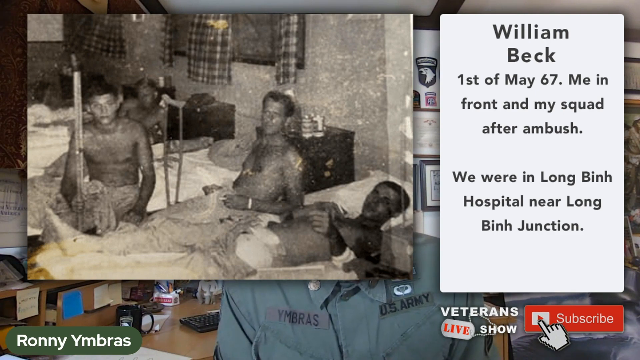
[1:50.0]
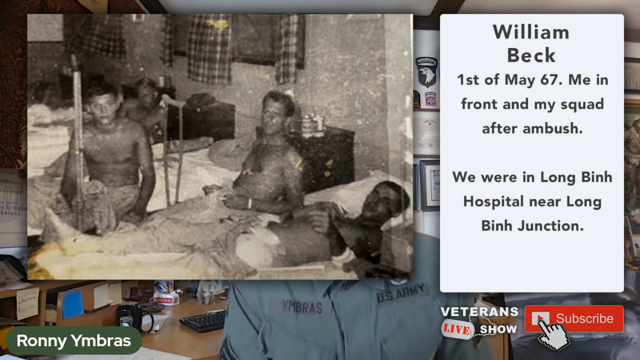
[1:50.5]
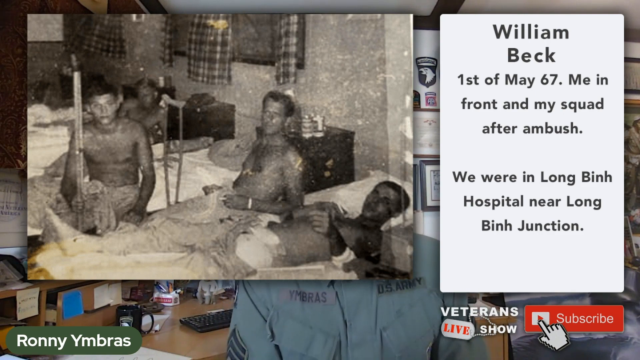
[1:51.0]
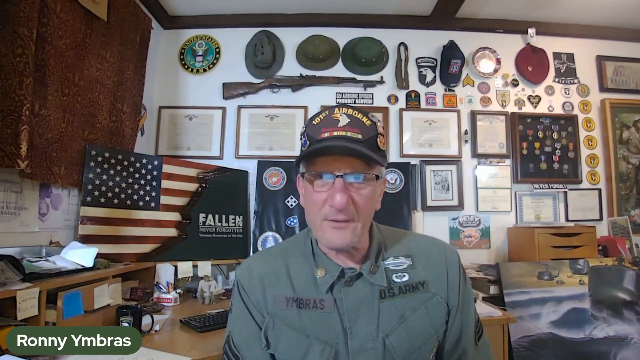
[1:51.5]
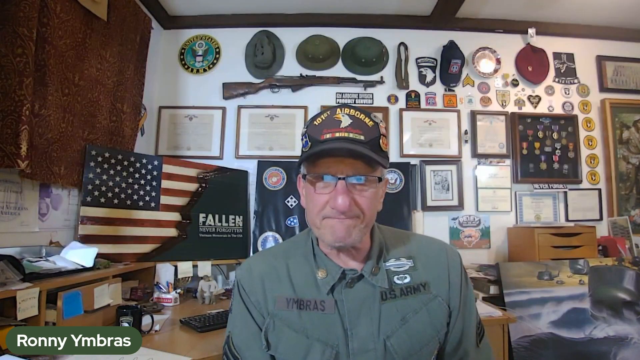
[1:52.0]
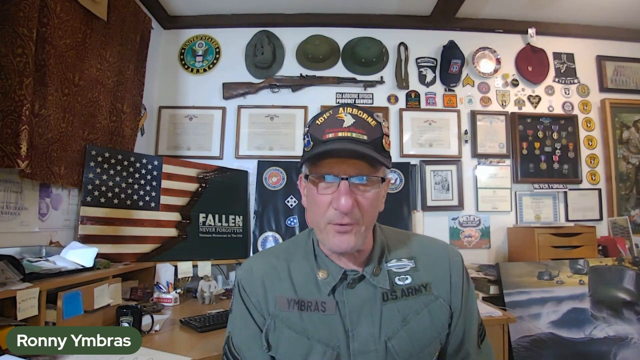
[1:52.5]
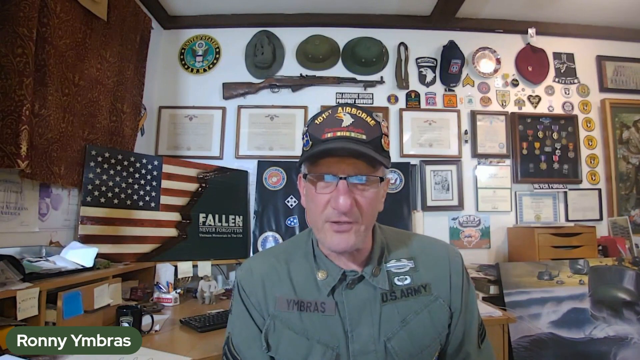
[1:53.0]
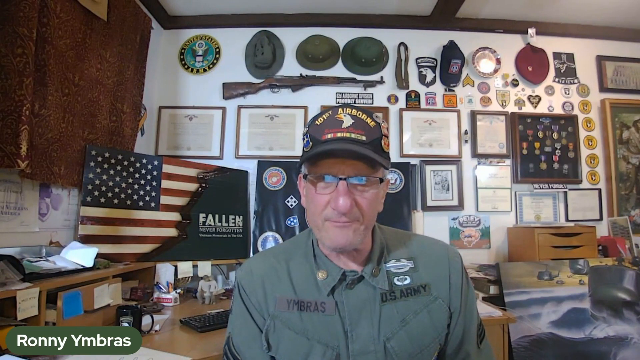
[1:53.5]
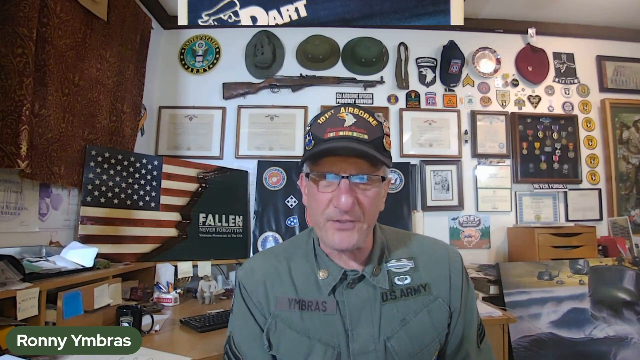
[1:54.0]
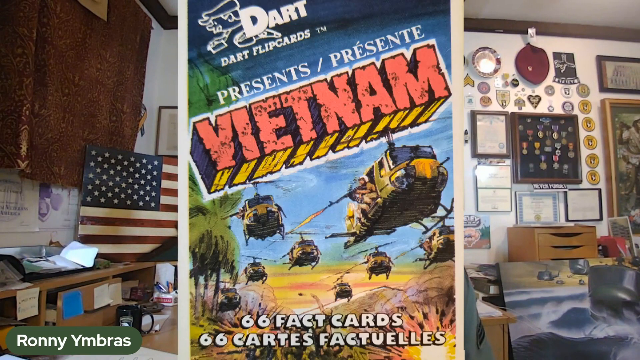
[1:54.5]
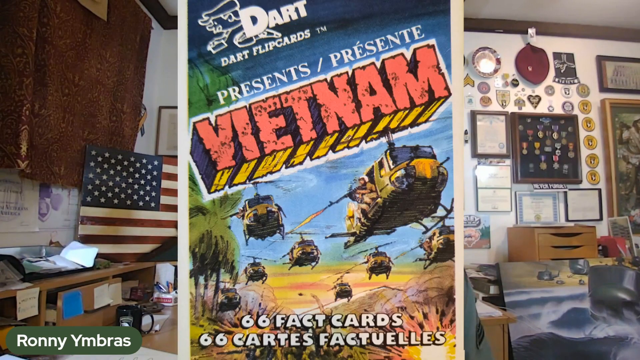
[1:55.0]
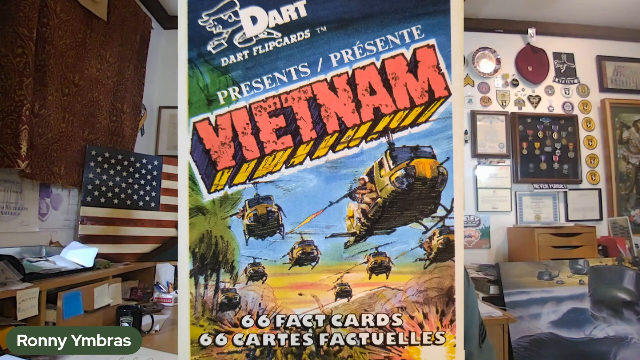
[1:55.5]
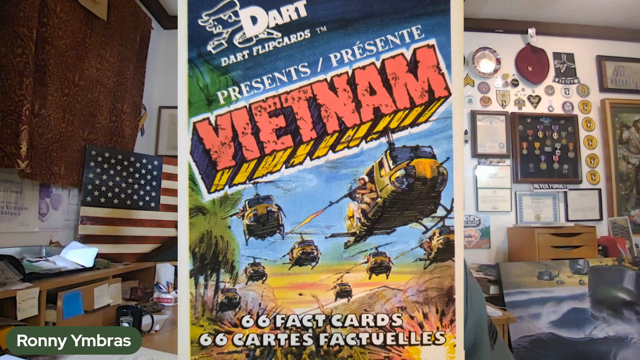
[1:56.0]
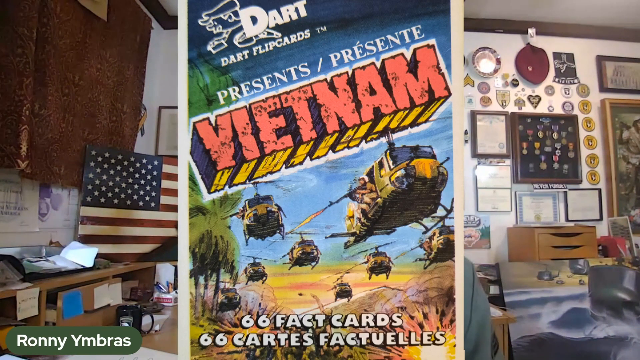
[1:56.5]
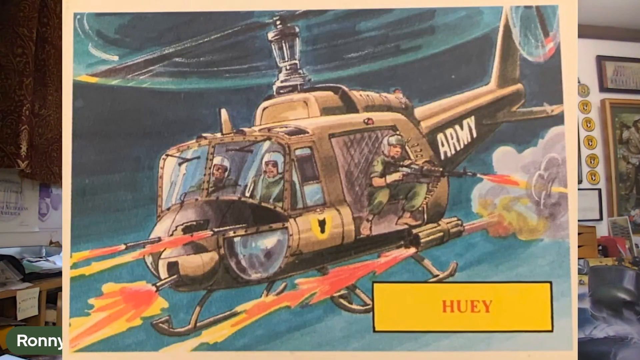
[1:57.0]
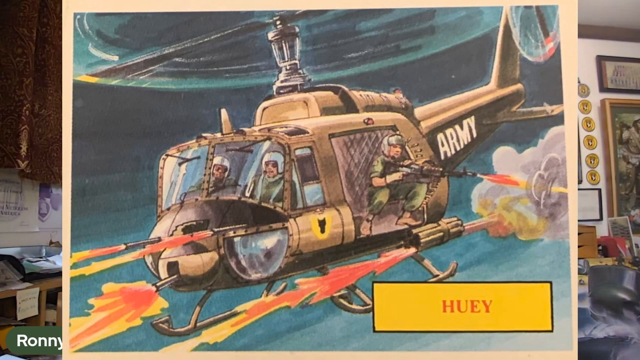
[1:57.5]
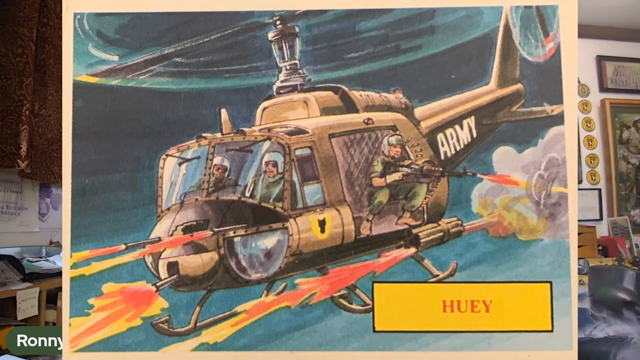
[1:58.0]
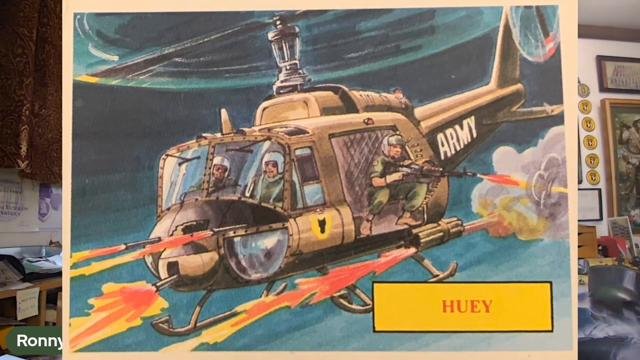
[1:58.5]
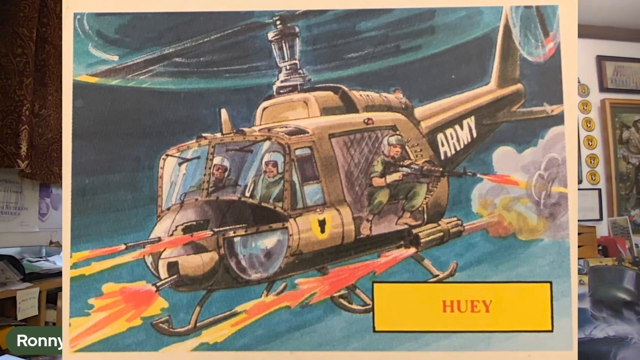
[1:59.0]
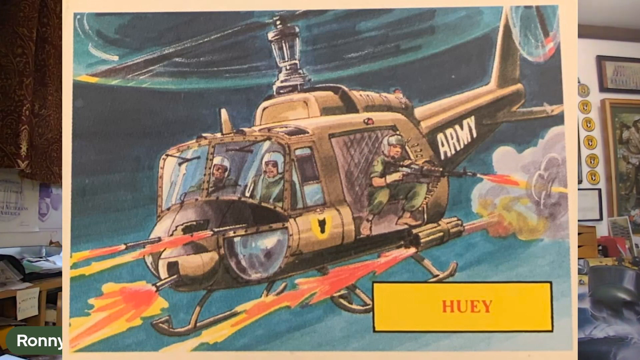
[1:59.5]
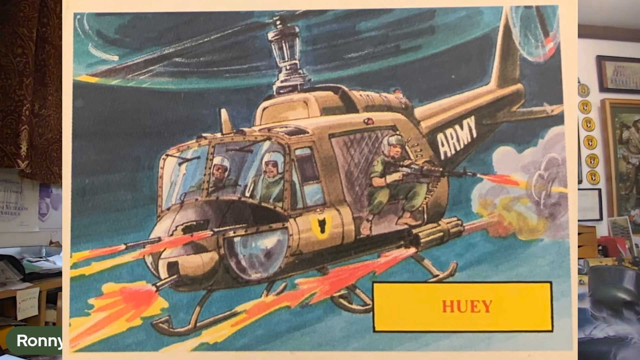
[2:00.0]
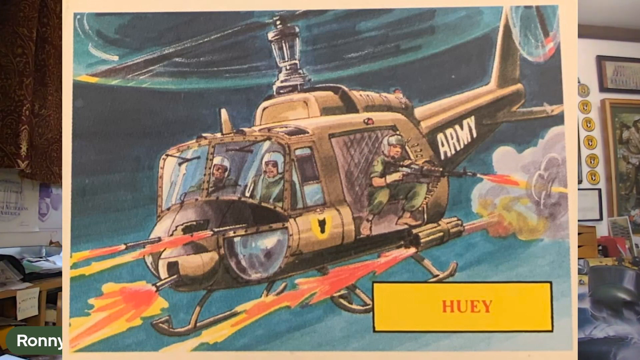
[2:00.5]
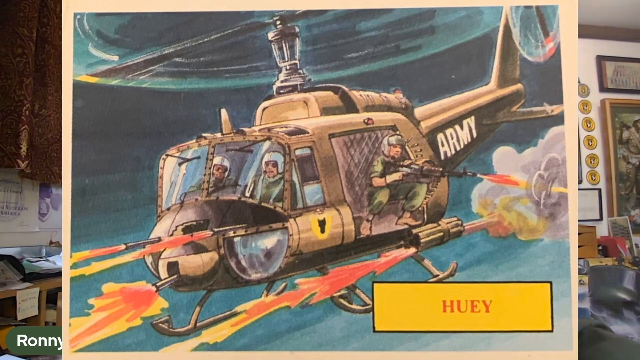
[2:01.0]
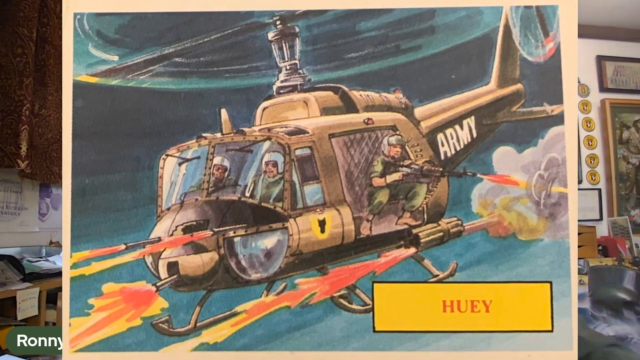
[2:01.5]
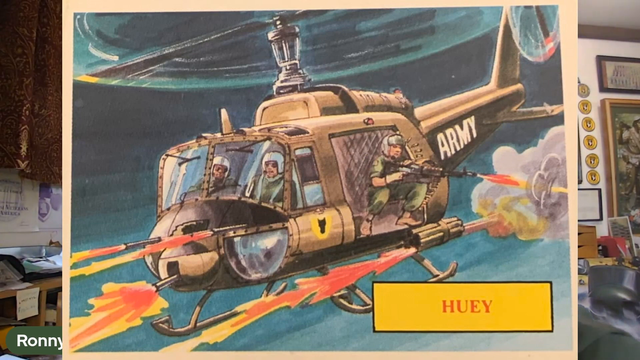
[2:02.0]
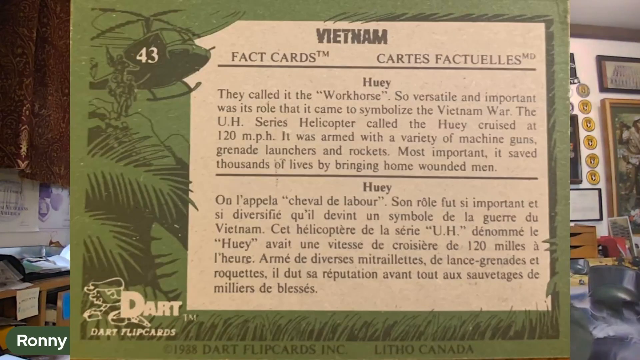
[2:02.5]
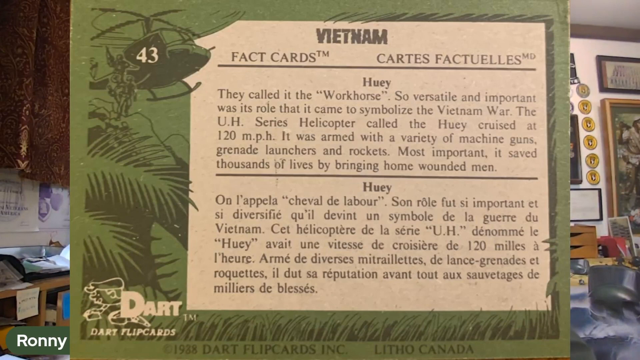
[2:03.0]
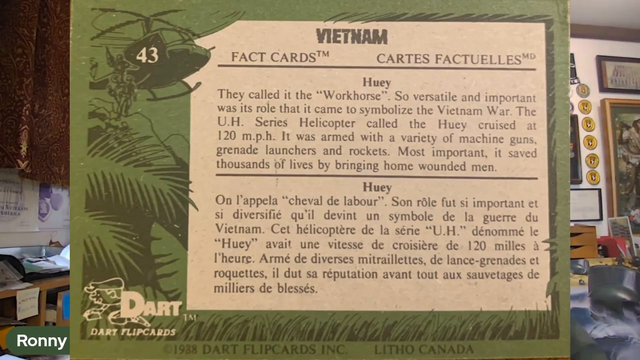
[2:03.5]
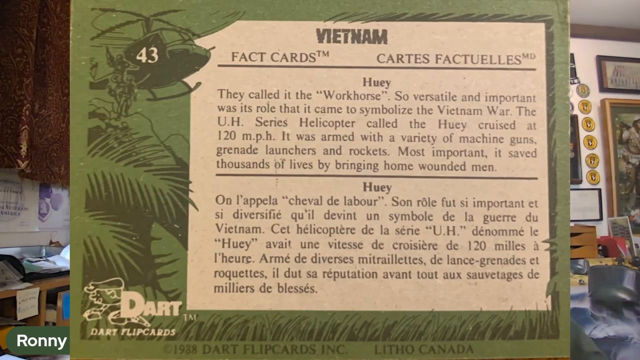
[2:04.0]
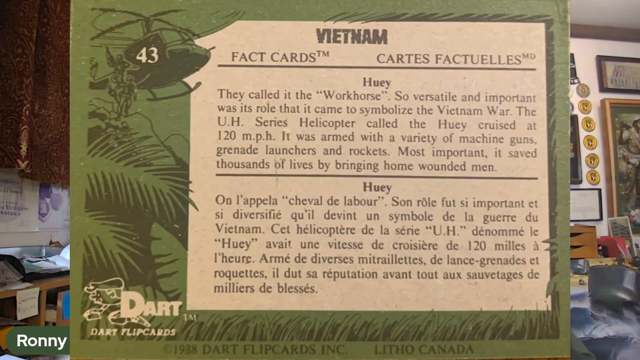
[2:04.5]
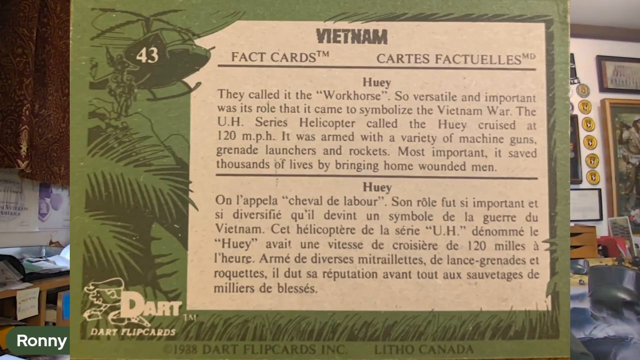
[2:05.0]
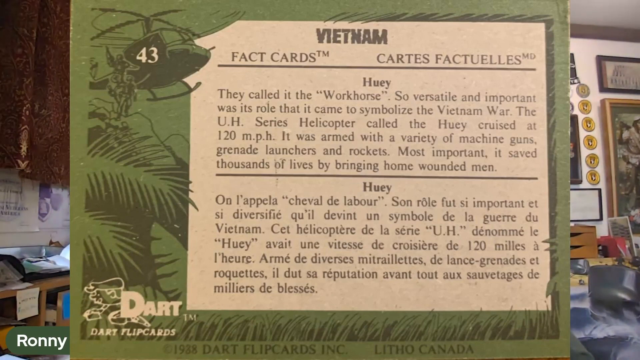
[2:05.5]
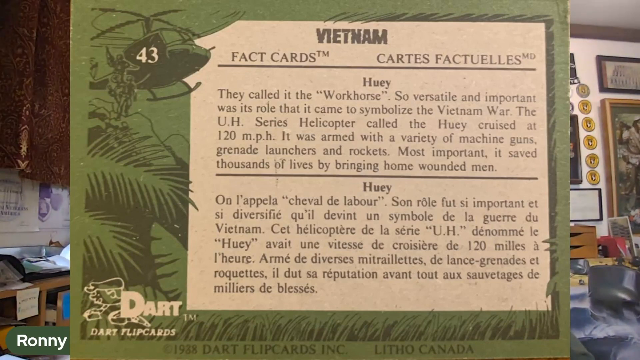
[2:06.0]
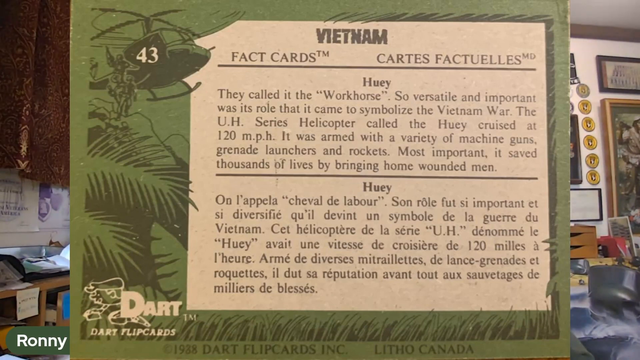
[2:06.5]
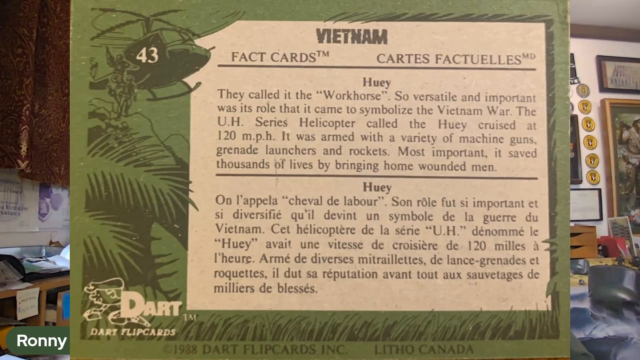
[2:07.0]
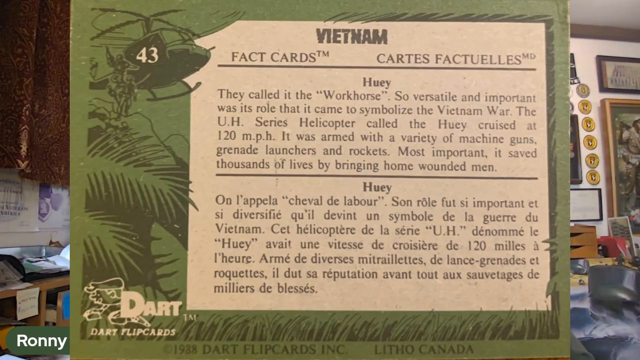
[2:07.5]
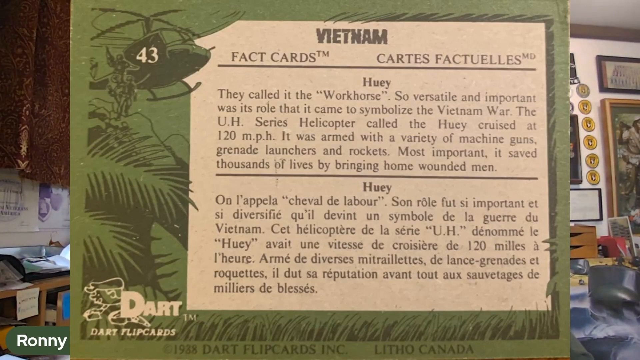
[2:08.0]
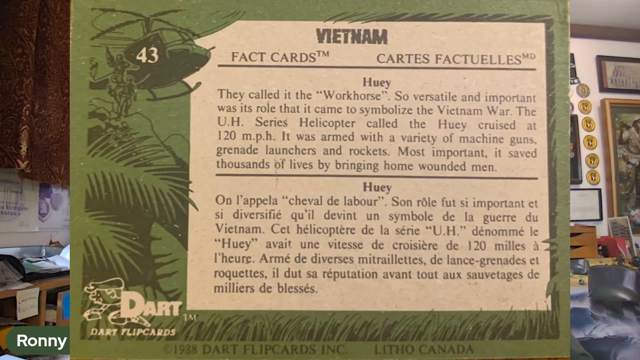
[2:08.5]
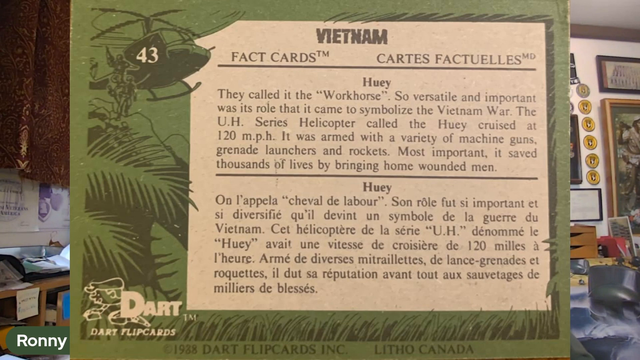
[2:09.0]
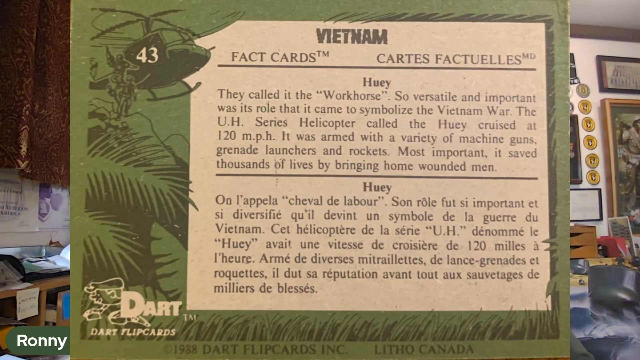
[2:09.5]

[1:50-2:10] Ronnie Yambres, a Vietnam veteran showing pictures from Vietnam, is seen talking about William Beck's picture from the 1st of May, 1967, showing him in front and his squad after an ambush, in the hospital. Four soldiers are in the picture. William lies in the bed, and another soldier, seemingly in the same bed or maybe in a wheelchair, leans back, apparently with a cigarette in his left hand. On a third bed a man sits up, with a crutch next to him, and he apparently holds the other crutch. Behind him a fourth soldier leans to the side. Ronnie is then seen talking again. He shows pictures from Vietnam that are not real photos but more cartoon-like: a Huey and Vietnam fact cards. The cards are in English and another language, possibly Spanish or French. One is card 43, about a Huey.